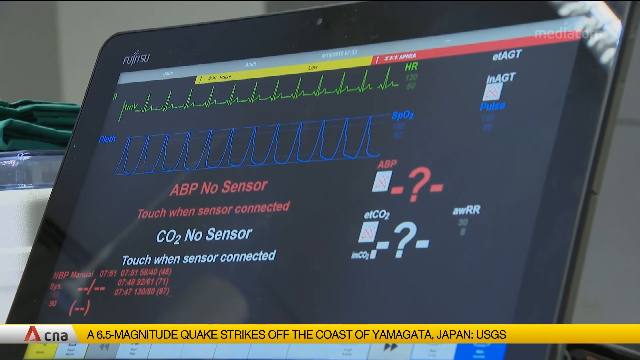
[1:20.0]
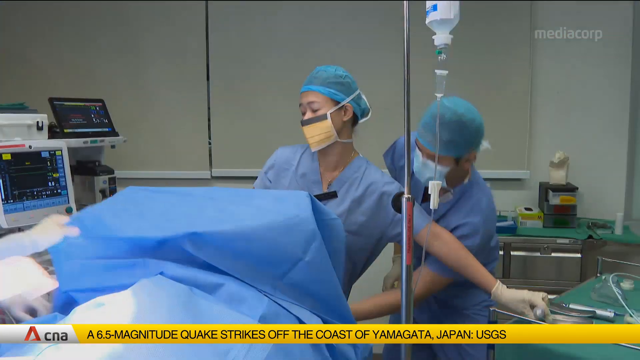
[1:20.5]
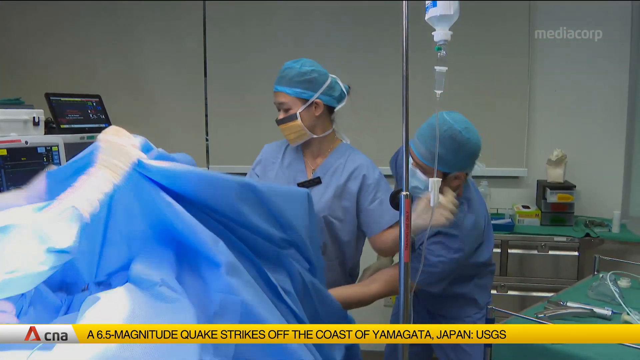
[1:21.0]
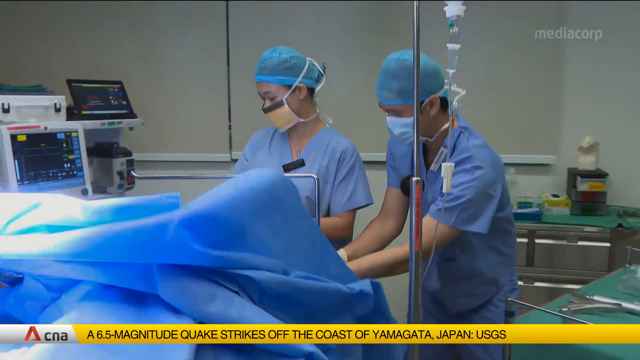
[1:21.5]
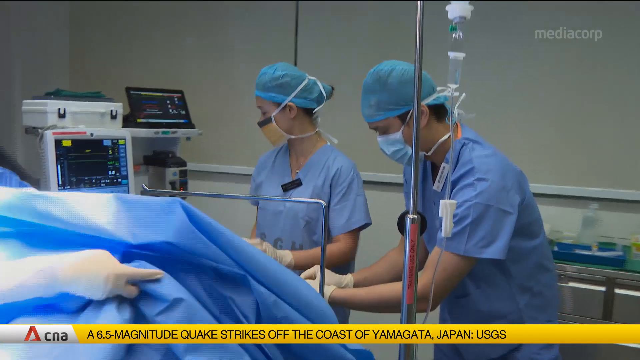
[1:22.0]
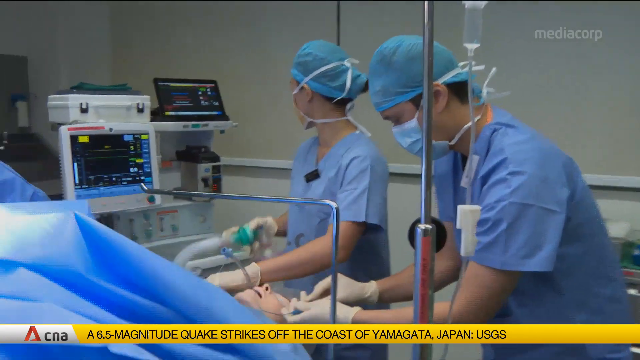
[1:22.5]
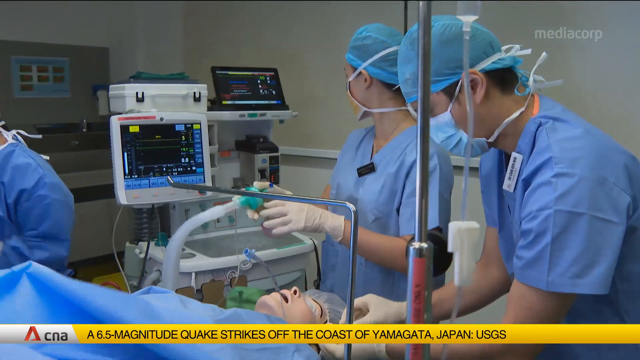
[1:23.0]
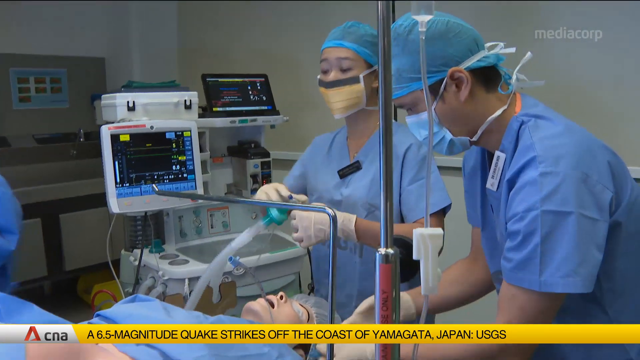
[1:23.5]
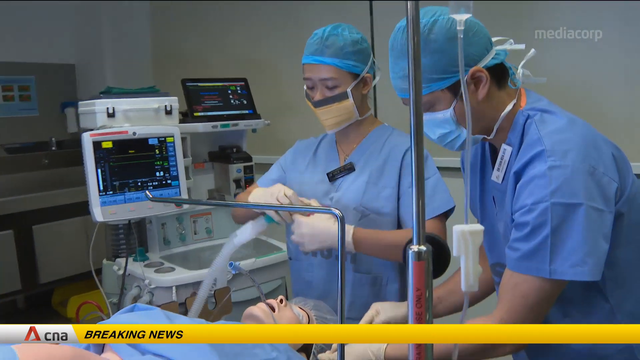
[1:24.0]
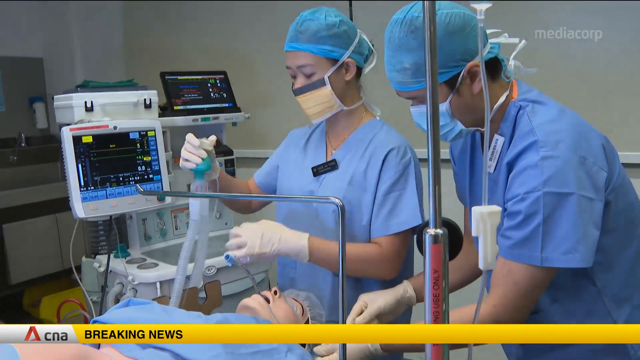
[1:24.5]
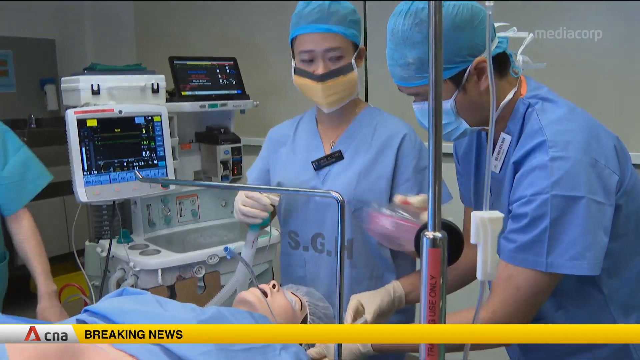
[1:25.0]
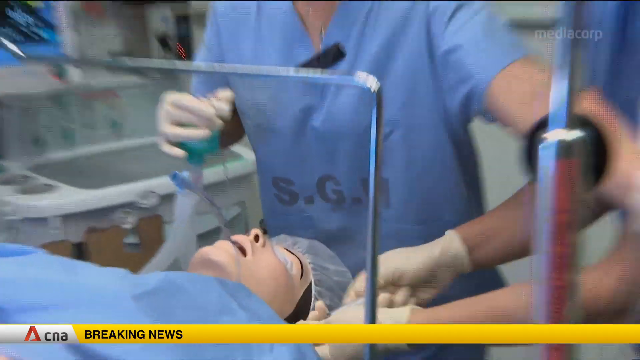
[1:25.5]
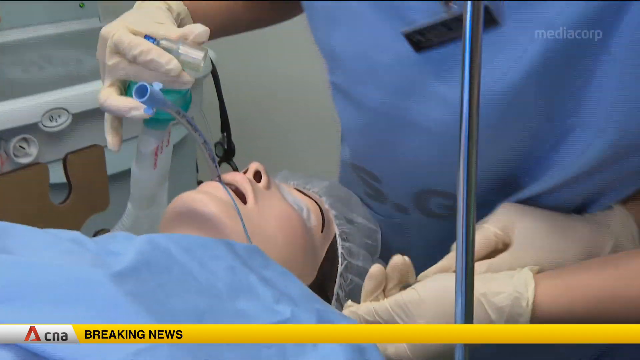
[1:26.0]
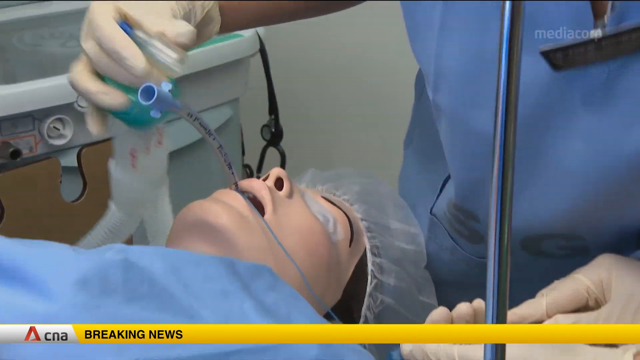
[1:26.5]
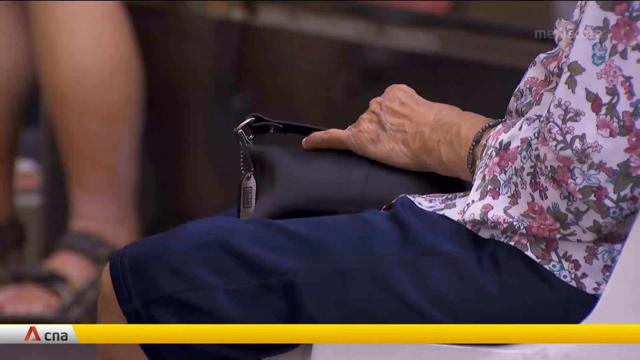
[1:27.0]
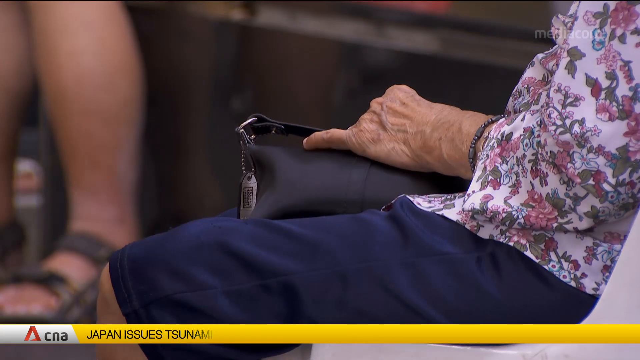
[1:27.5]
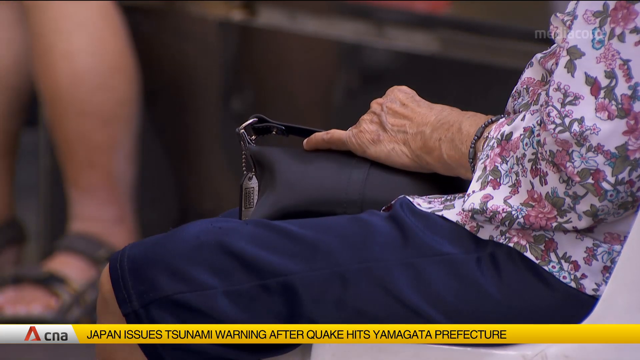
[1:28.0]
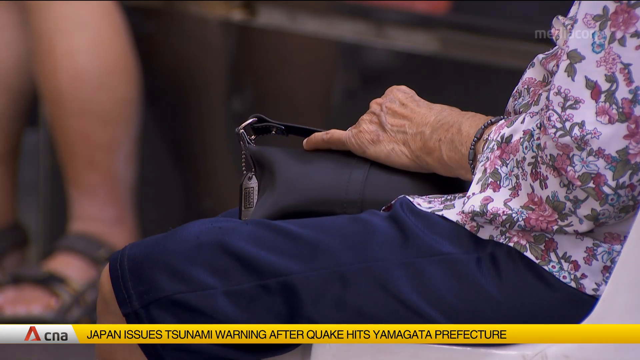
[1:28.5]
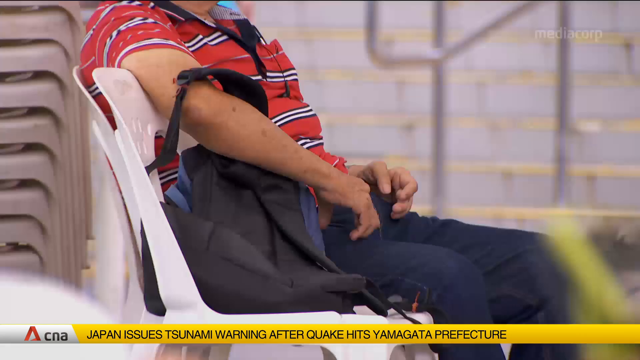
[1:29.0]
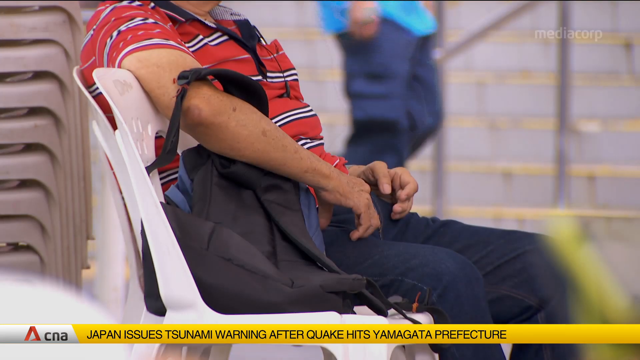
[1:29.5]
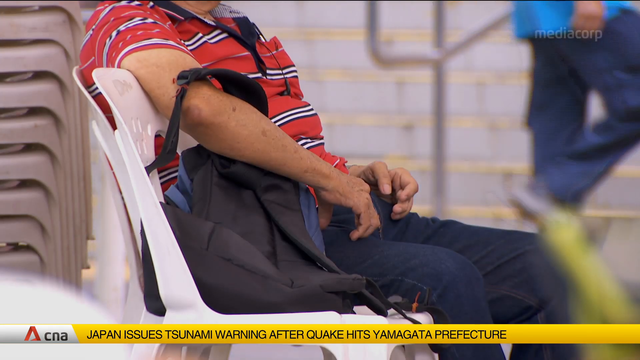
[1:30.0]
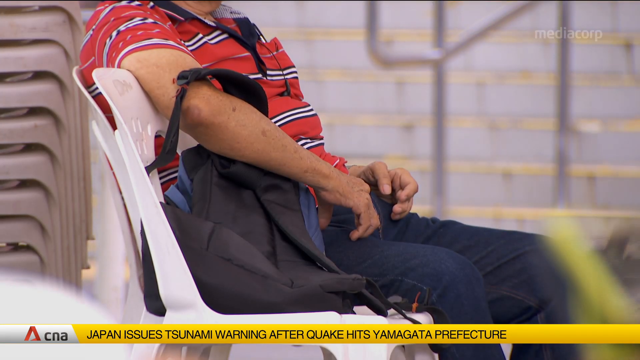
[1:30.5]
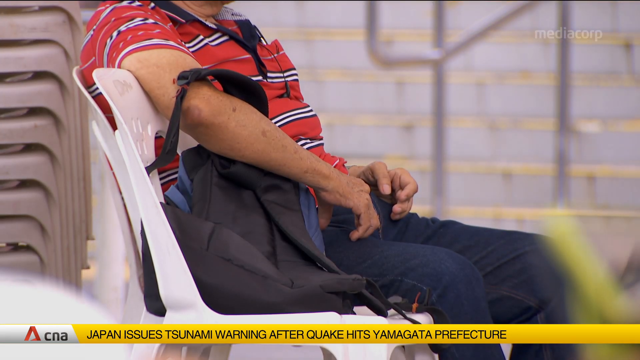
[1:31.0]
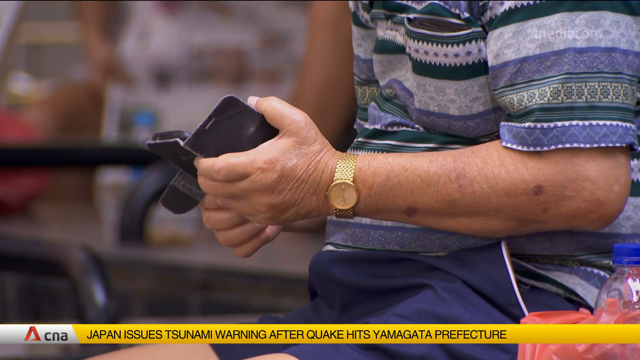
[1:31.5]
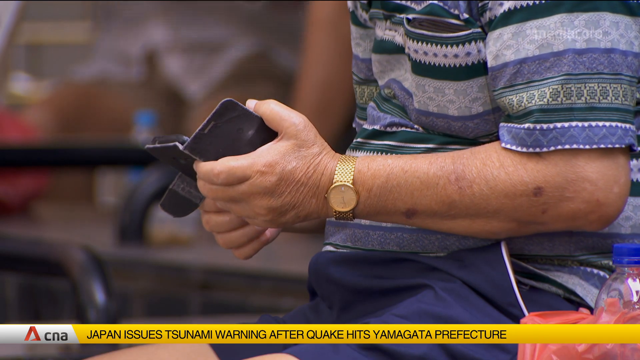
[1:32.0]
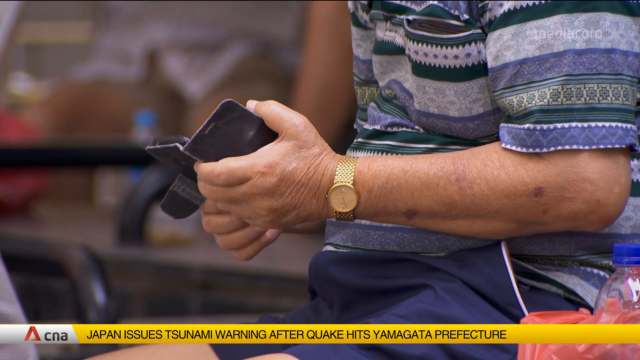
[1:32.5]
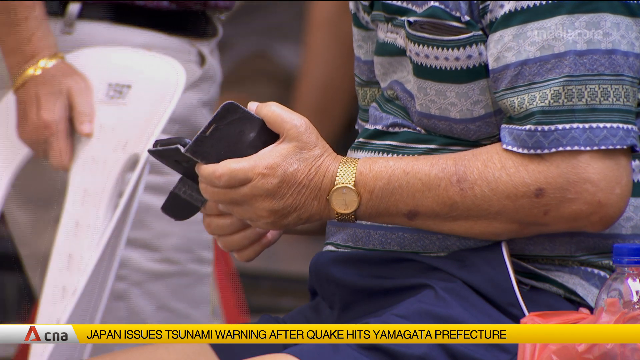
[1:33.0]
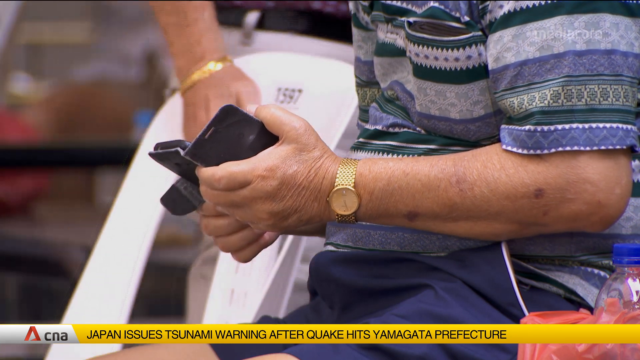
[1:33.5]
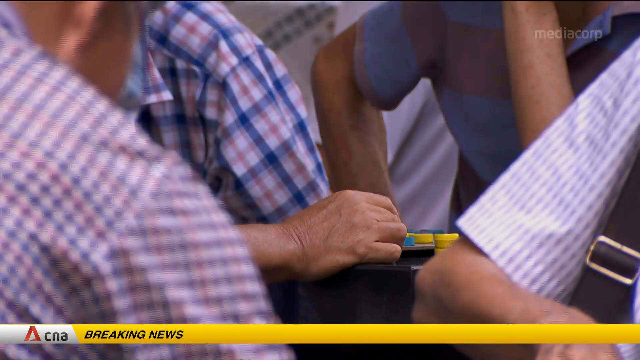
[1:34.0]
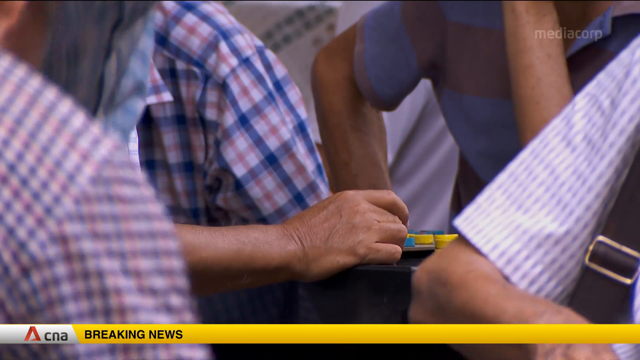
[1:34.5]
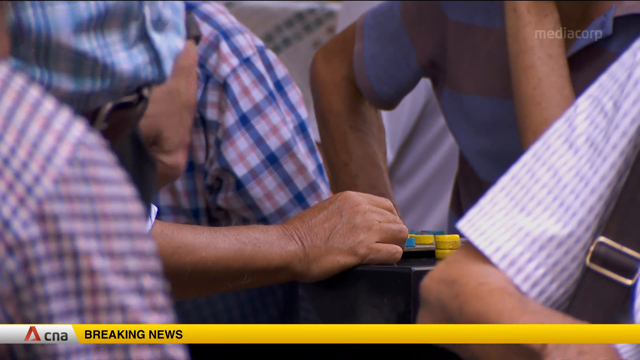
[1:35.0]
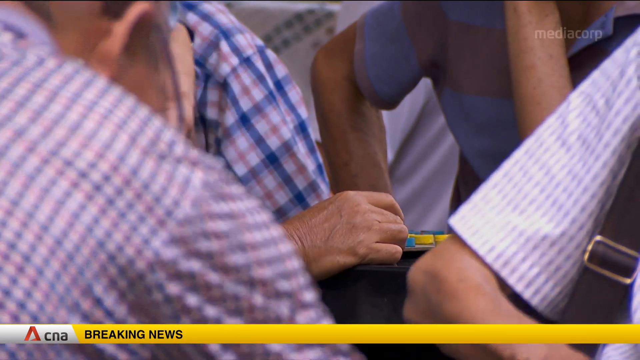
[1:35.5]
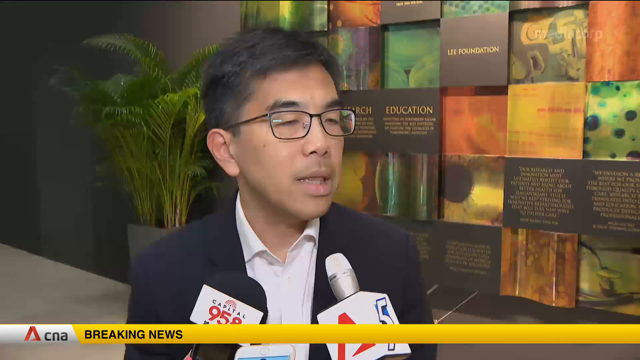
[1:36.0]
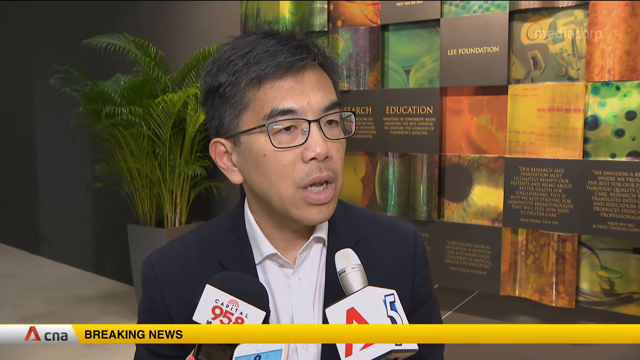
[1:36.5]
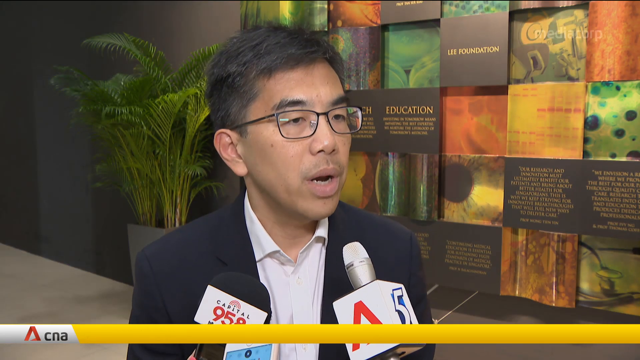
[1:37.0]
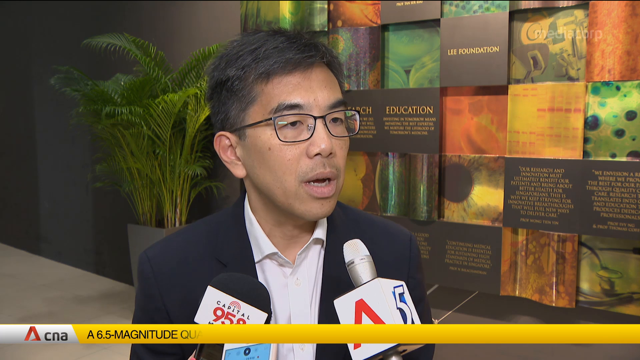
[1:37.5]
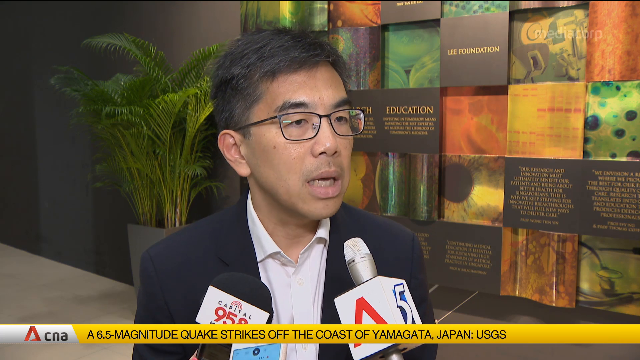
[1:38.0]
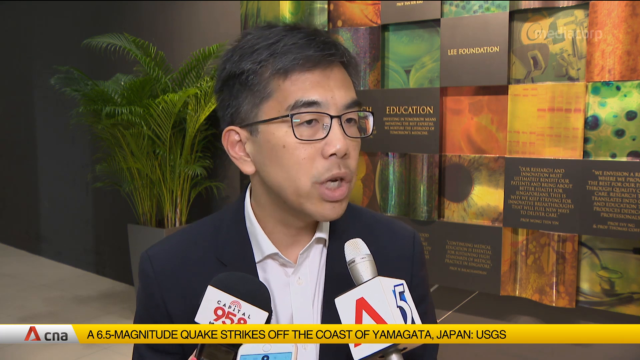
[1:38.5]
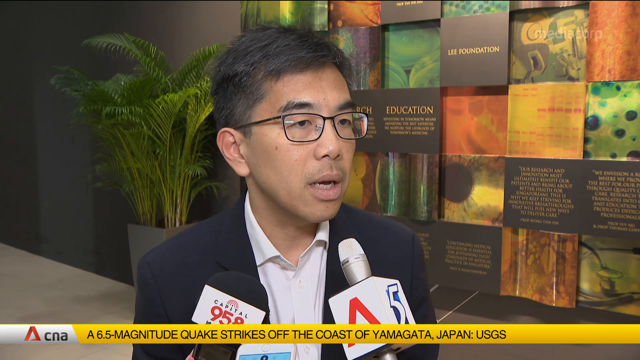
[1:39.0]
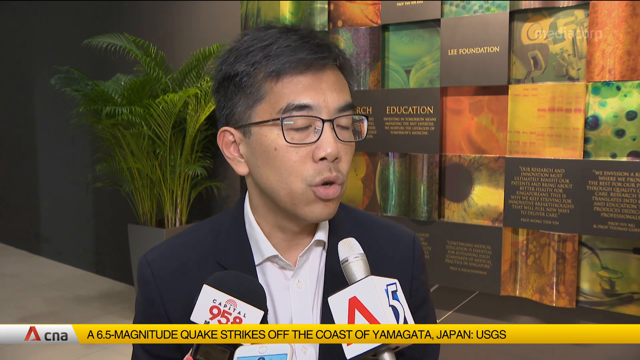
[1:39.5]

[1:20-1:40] A monitor shows what is happening with a supposed patient. It has two graphs: a green line that looks like the heart rate, with "HR" written in green, and below it a blue line going up and down, labeled "SP02." The view then switches to a hospital bed in the lower left, with arms coming in from off screen on the left side working on it, and two doctors in the background. The one on the left disconnects a mask, and the view goes down to the bed, revealing that it is actually a practice dummy. The scene then switches to people sitting: first the torso of an old lady sitting in a seat, then a man, his head also not visible, sitting in a white chair facing right, with a backpack to his right in the white chair beside his.